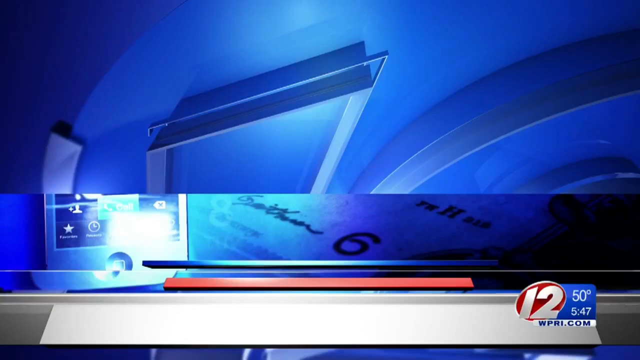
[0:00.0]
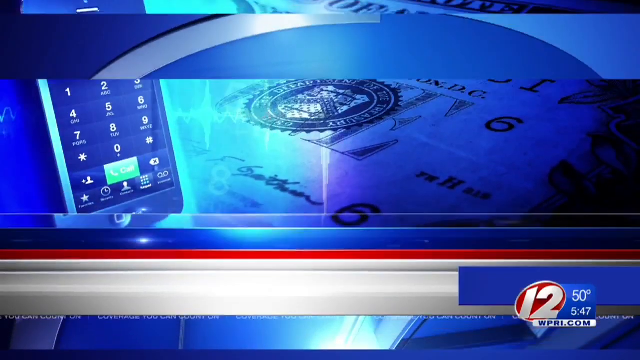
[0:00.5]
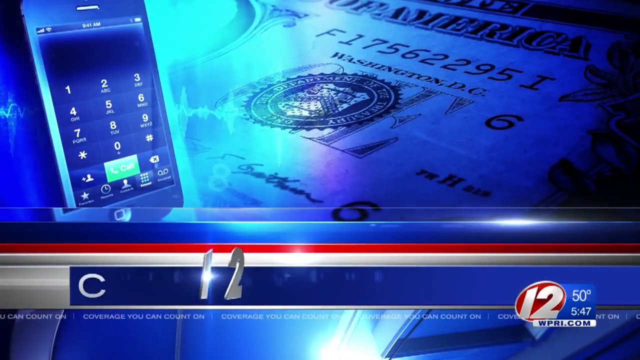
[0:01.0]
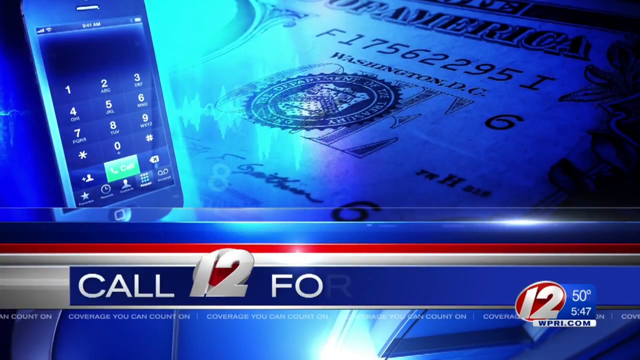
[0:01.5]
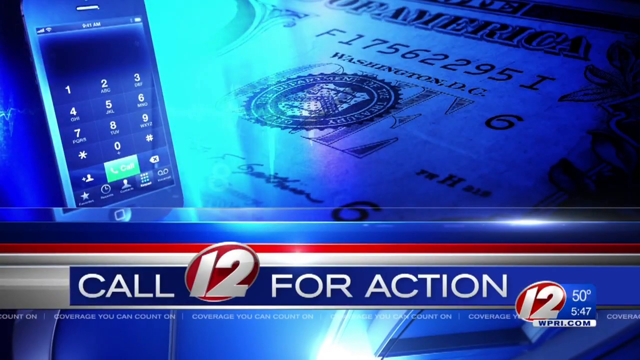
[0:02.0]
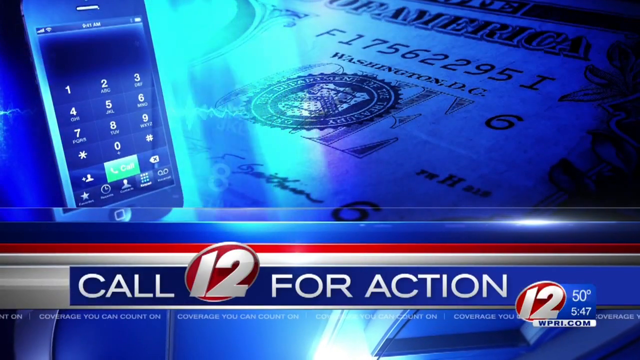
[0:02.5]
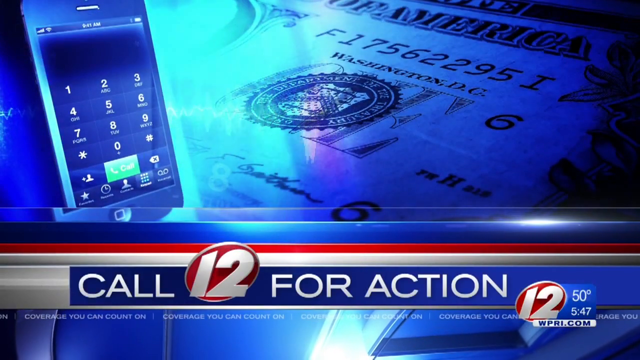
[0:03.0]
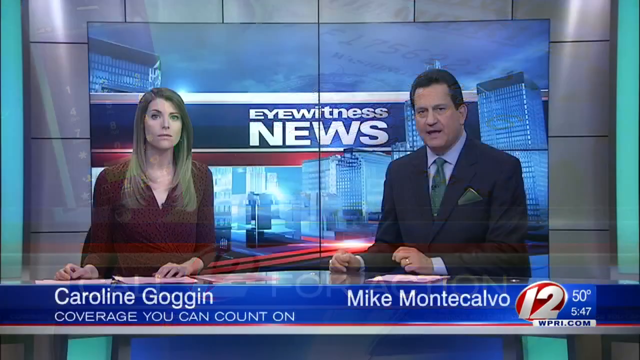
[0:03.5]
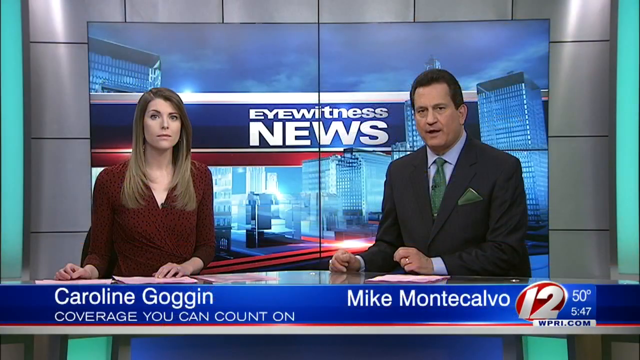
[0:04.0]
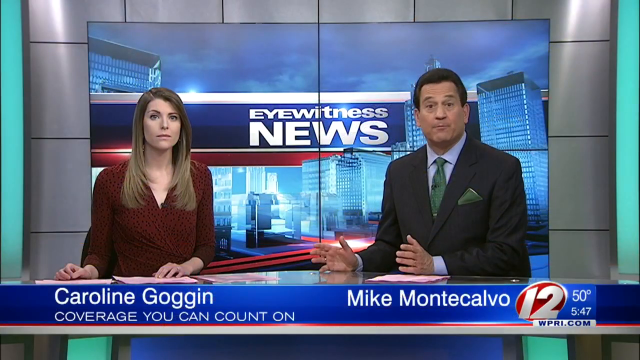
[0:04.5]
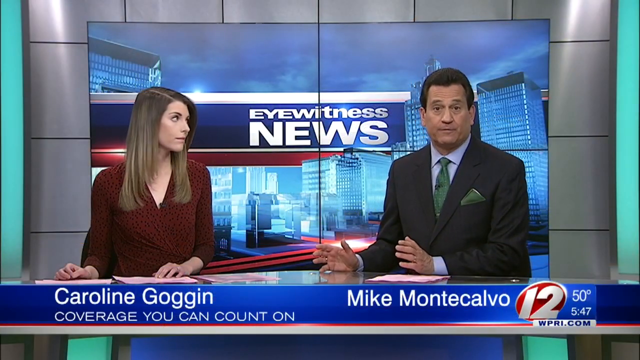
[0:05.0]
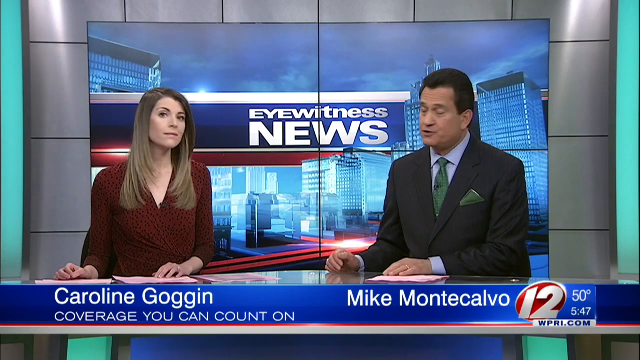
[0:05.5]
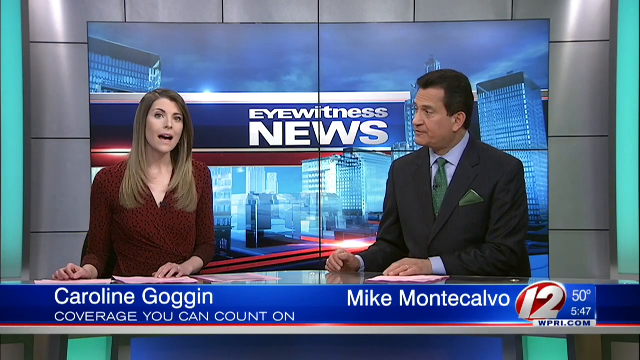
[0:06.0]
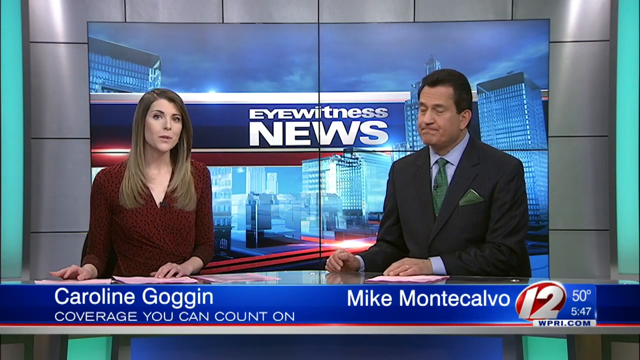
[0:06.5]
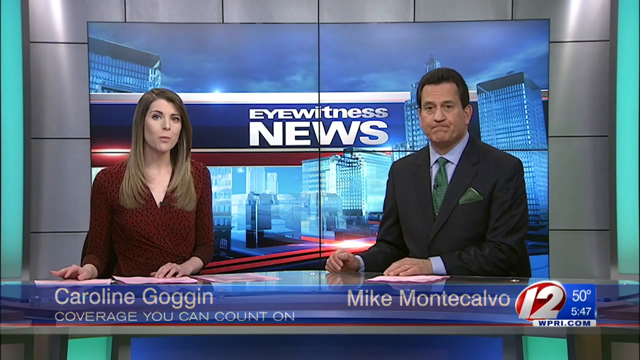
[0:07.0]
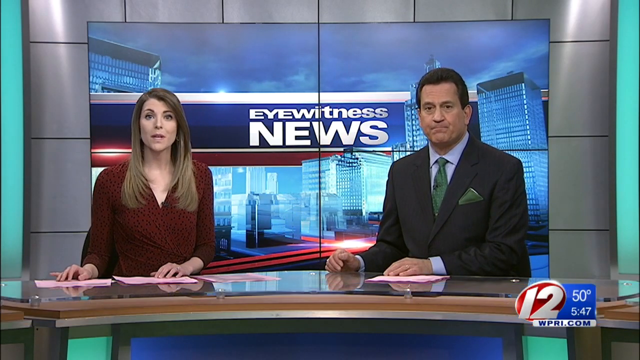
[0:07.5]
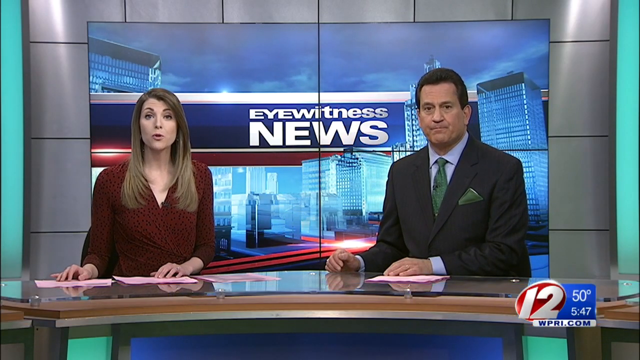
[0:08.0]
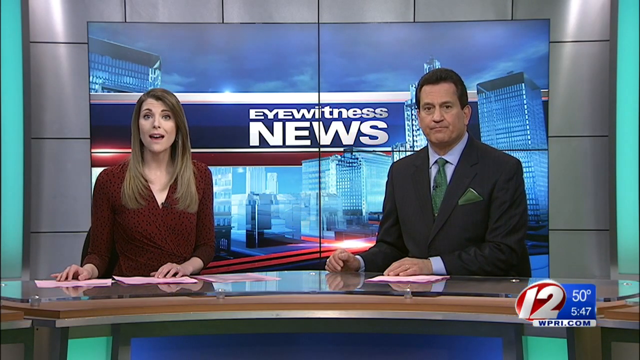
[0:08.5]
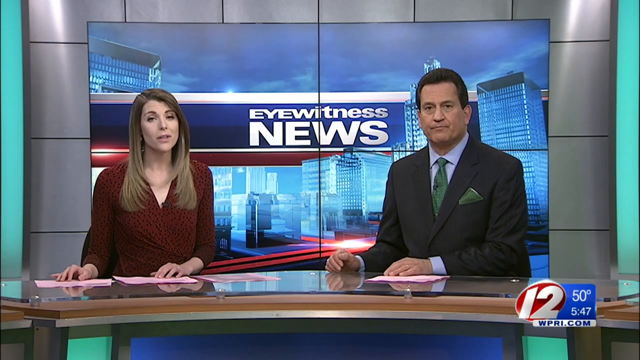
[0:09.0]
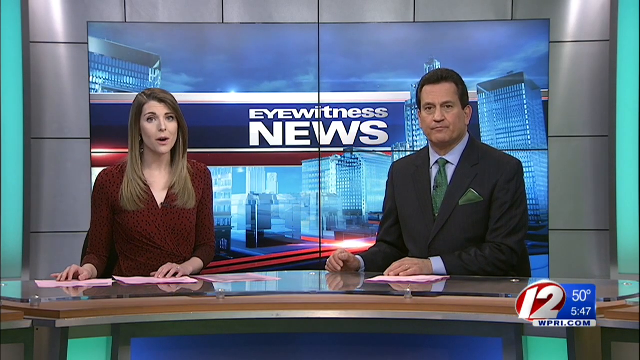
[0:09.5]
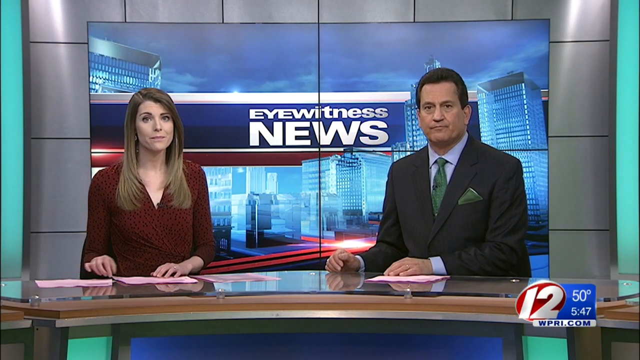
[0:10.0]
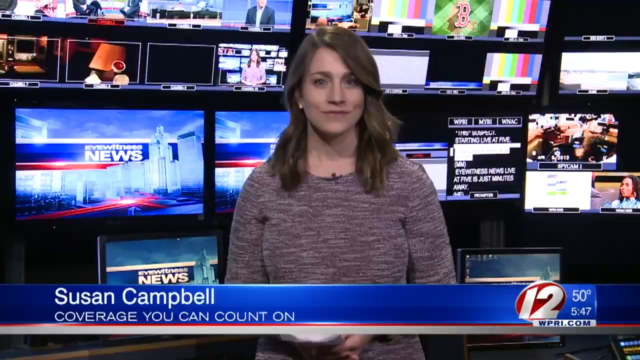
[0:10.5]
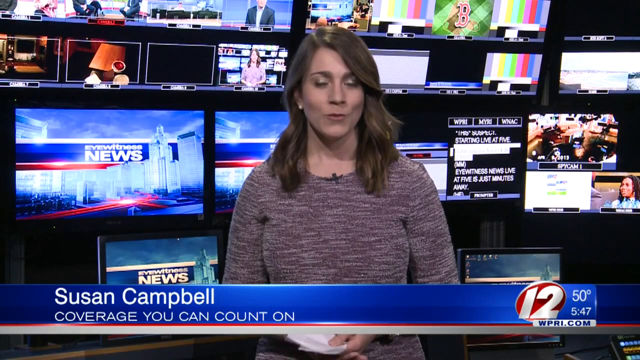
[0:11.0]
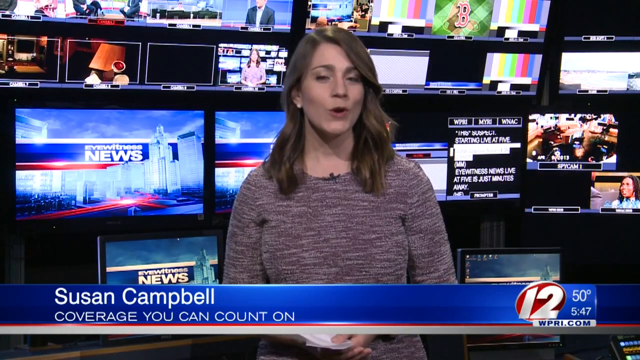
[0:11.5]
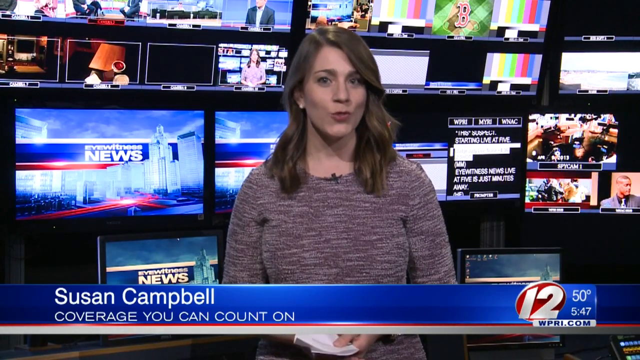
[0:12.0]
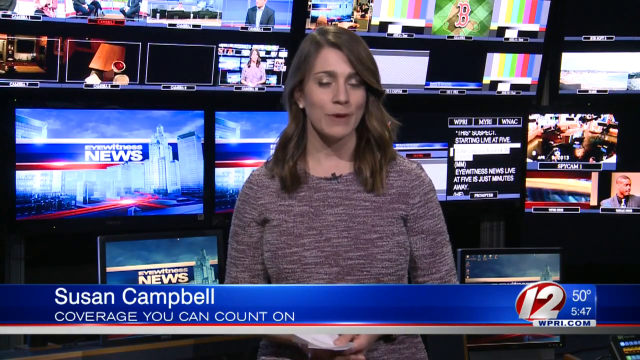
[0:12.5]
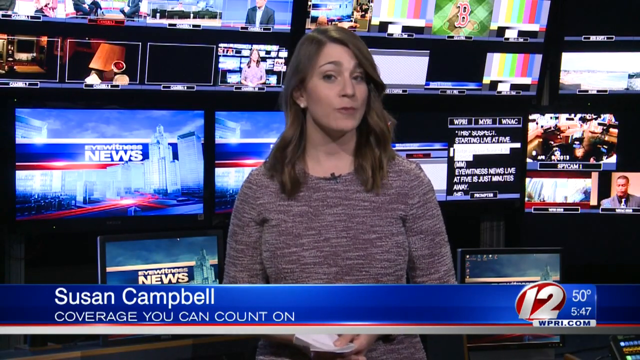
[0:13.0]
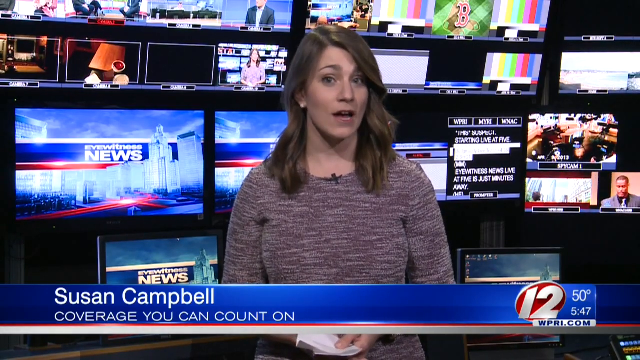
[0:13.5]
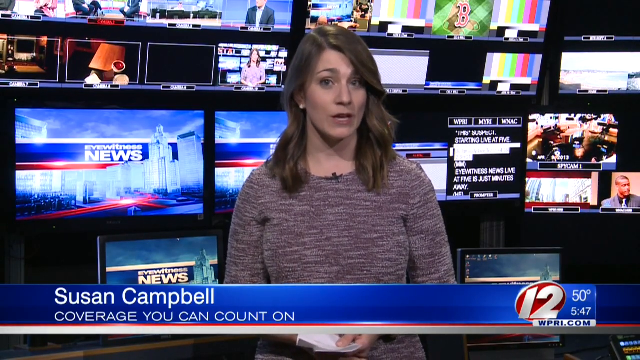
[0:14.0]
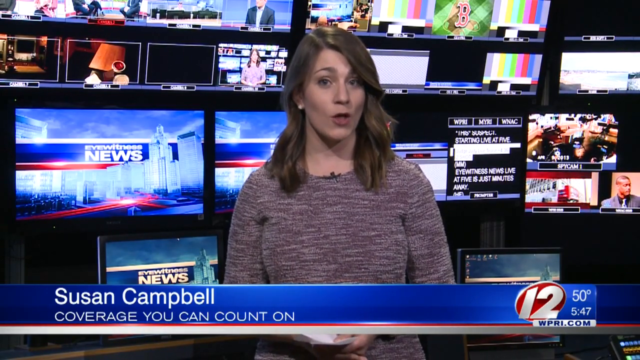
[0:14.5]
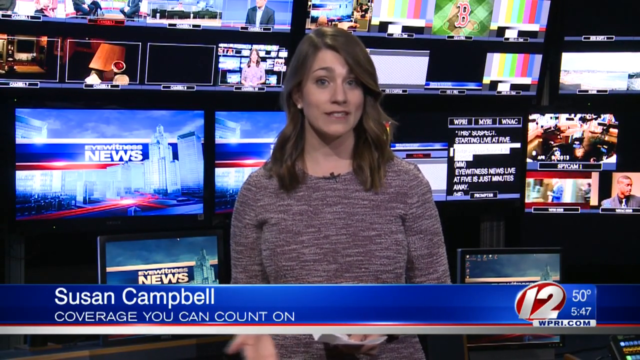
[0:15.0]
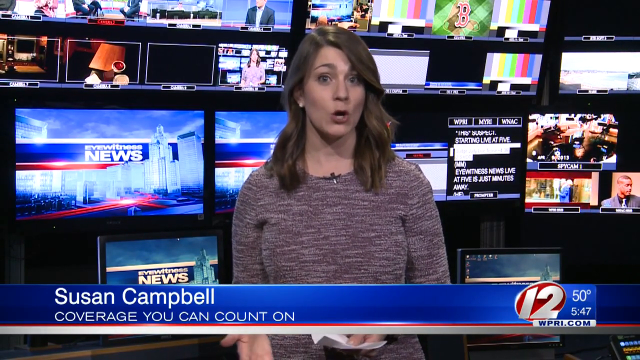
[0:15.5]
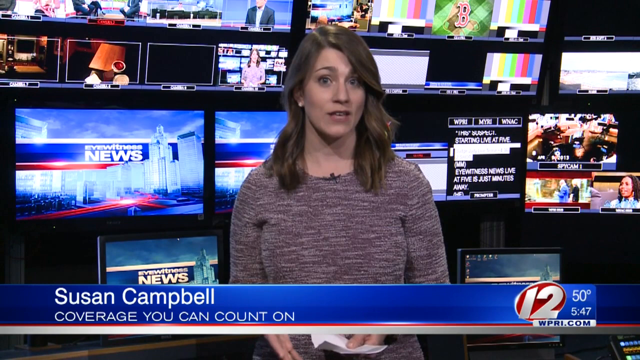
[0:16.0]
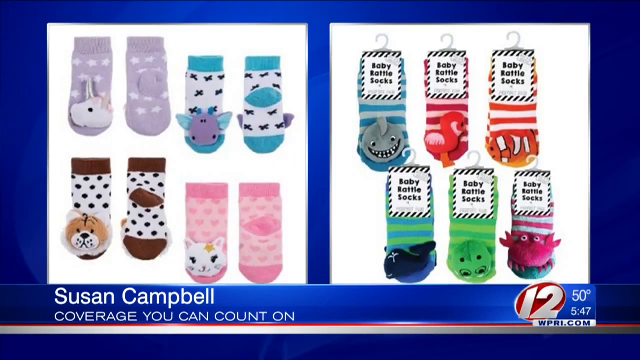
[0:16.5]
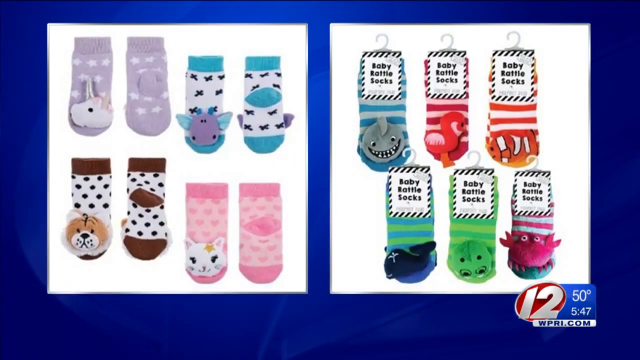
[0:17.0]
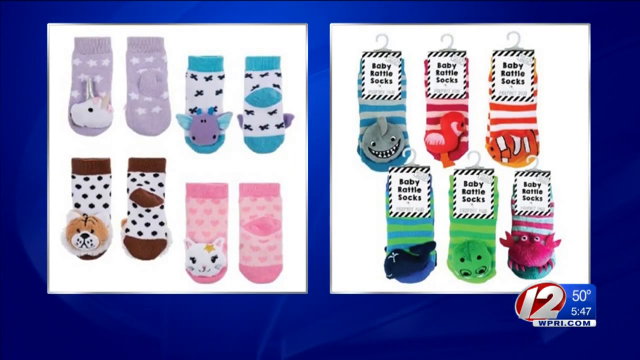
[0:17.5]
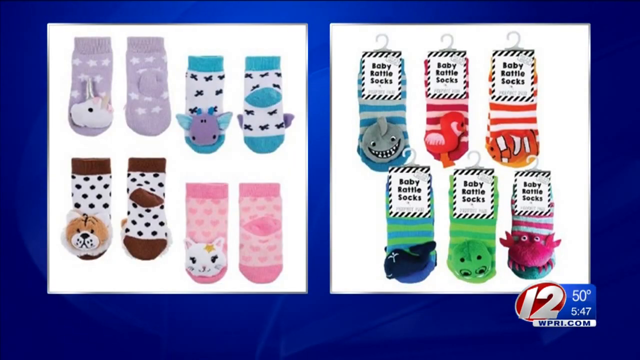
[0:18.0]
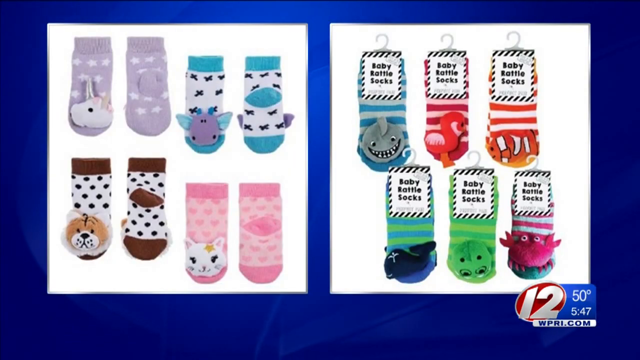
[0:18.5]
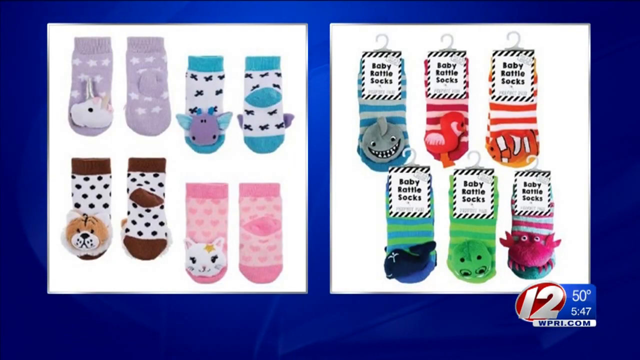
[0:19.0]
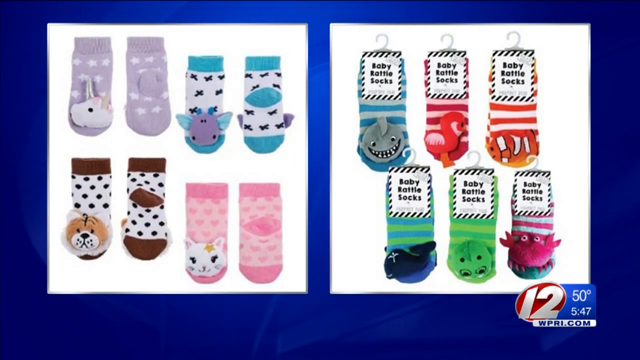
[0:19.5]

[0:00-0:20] The video opens with "12wpri.com" in the bottom left-hand corner of the screen, along with the weather at about 50 degrees and the time, 5:47. Apparently this is the Eyewitness News, and the text "call 12 for action" appears. Two news anchors sit at a desk, with a green screen behind them that says "eyewitness news". The anchor on the right is Matt Montecalvo, a middle-aged man in a blue button-up shirt, a green tie, a dark blue or black blazer, and a green handkerchief in his left pocket. The anchor on the left is a woman, Carolyn Goggin, possibly in her 40s to mid-50s, wearing a dark red wrap dress, or possibly a wrap skirt. The segment is called Coverage You Can Count On.